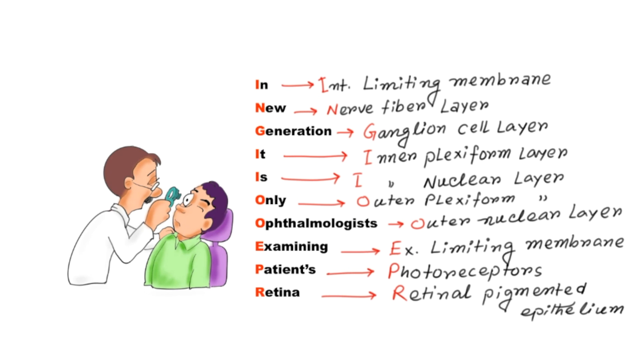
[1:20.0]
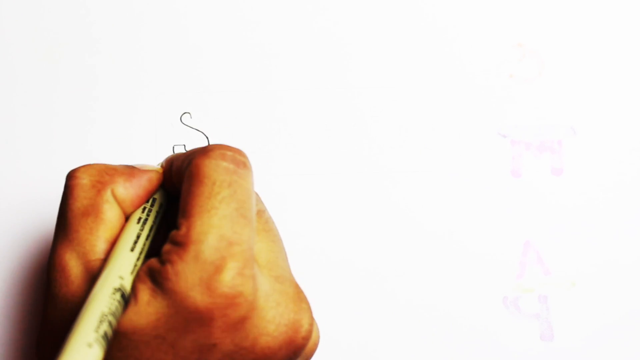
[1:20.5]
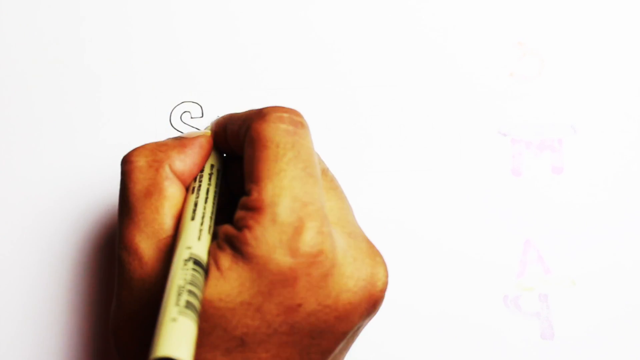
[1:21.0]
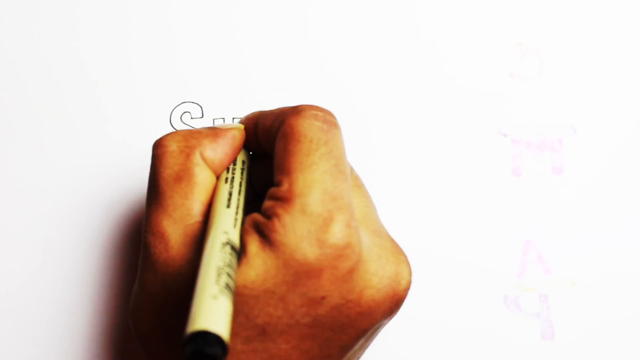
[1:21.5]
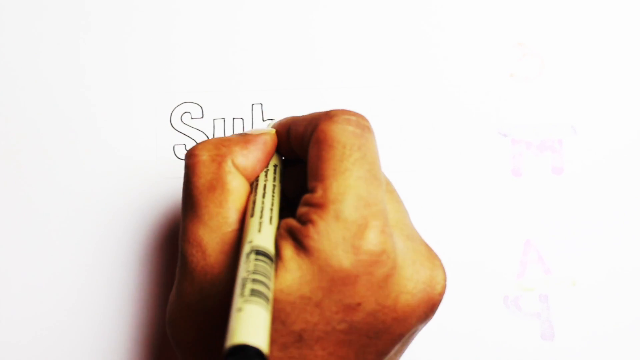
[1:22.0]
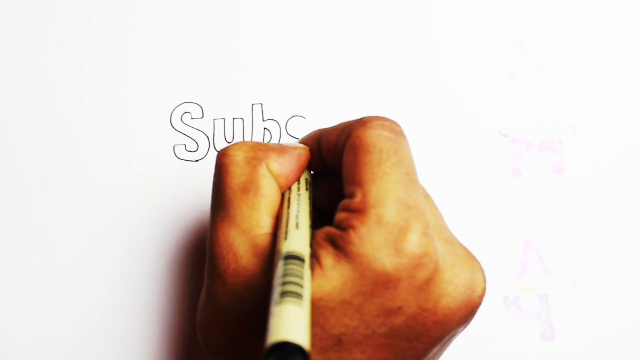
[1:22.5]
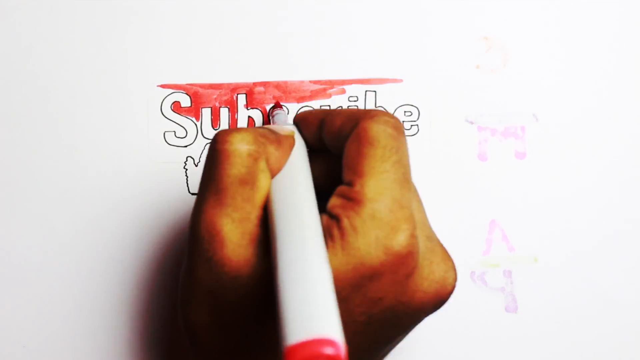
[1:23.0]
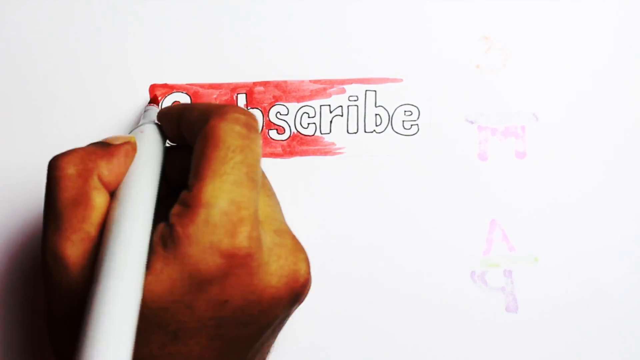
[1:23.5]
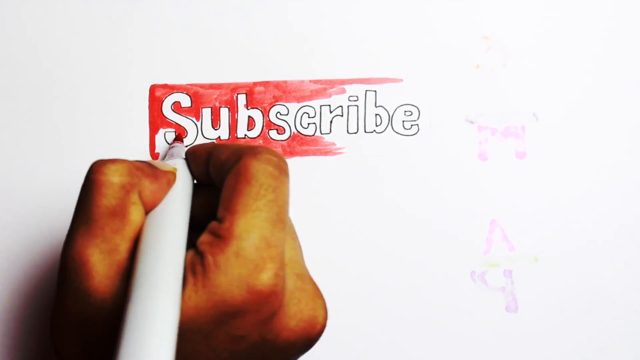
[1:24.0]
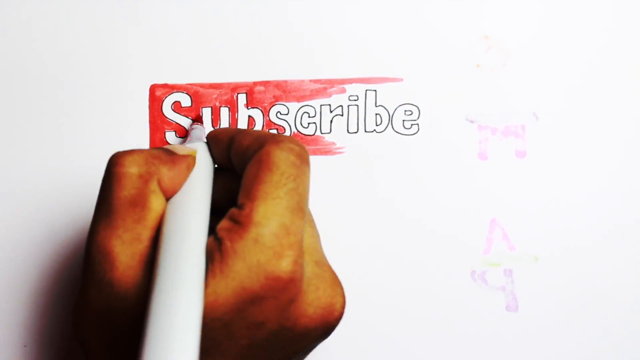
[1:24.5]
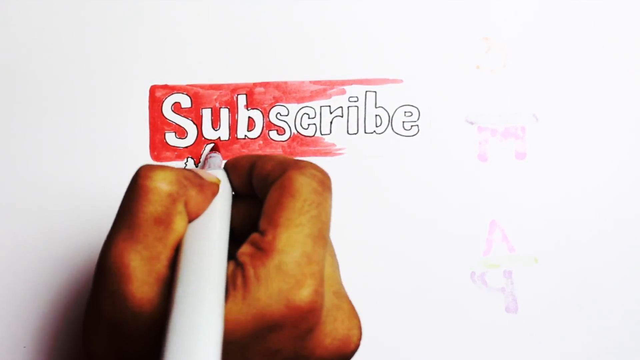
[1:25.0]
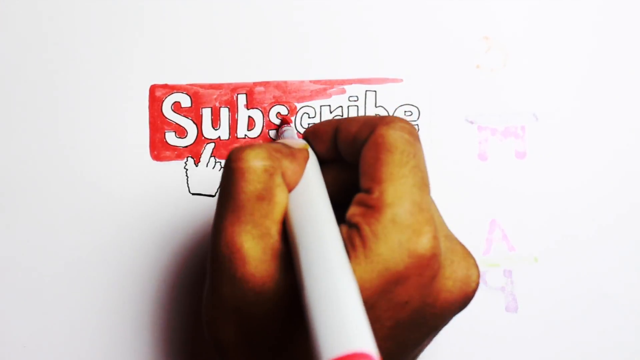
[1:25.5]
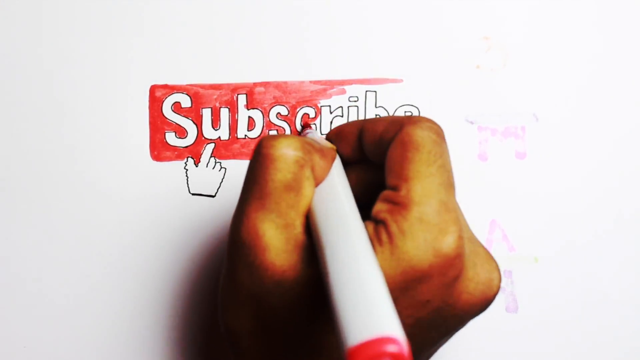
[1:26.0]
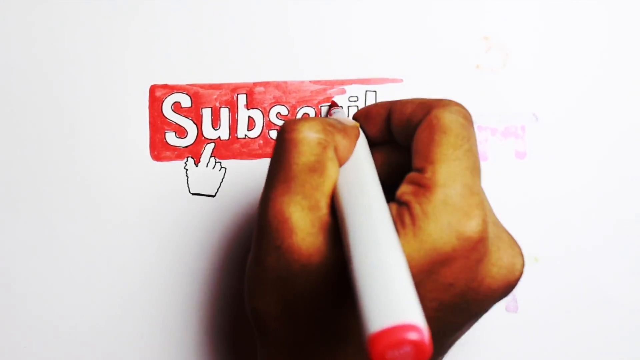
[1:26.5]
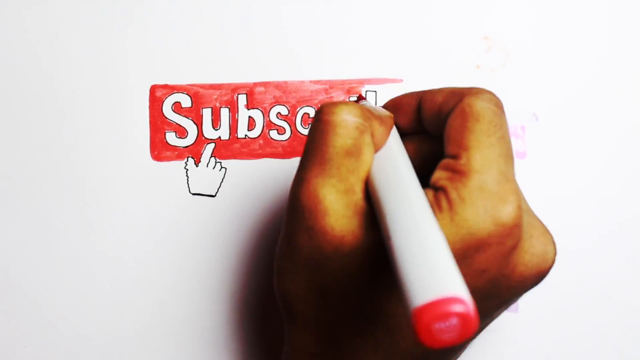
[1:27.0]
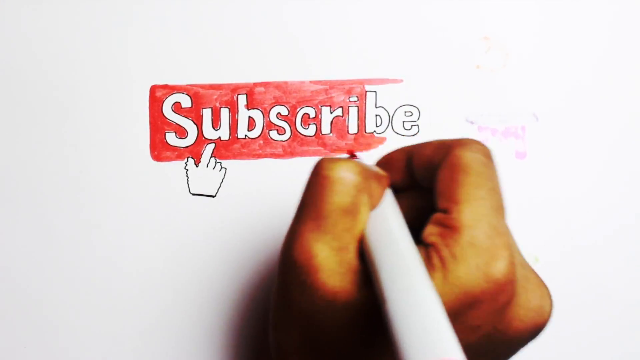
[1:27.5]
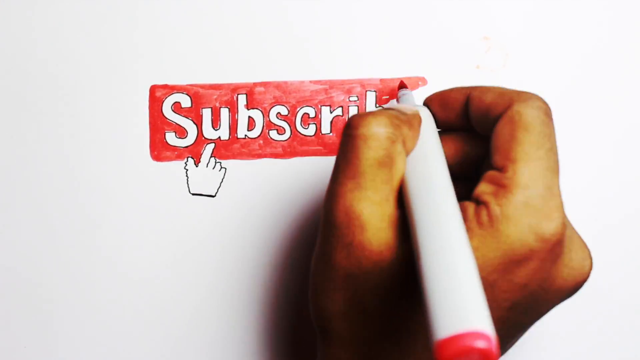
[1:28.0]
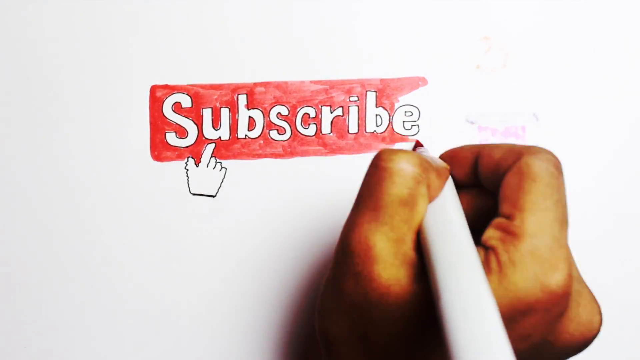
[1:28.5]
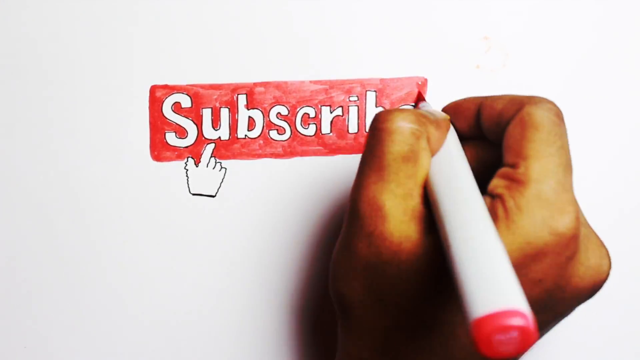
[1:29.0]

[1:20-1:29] At the bottom left is what looks like a drawing of a doctor on the left looking into the right eye of his patient, who sits on the right with his left eye closed and his right eye open. In the middle is a list reading "in new generation, it is only ophthalmologists examining patient's retina". It looks like some sort of mnemonic device: next to each word is a red arrow, the first letter of each word is written in orange, and black text follows. From the top it reads "int-limiting membrane", "nerve fiber layer", "ganglion cell layer", "inner plexiform layer", "inner nuclear layer", "outer plexiform", "outer nuclear layer", "X-limiting membrane", "photoreceptors", and last, for R, "retinal pigmented epithelium". A right hand holding a pen then comes up from the bottom of the frame and writes a 3D "subscribe". The pen then switches to a red marker, which colors behind the word, apparently making a YouTube subscribe button: it draws from left to right, coloring a red rectangle behind the white "subscribe" text.